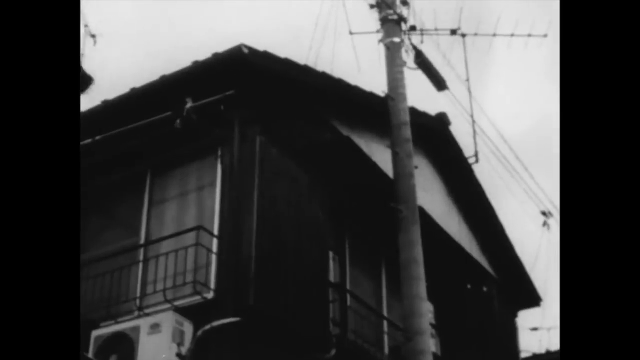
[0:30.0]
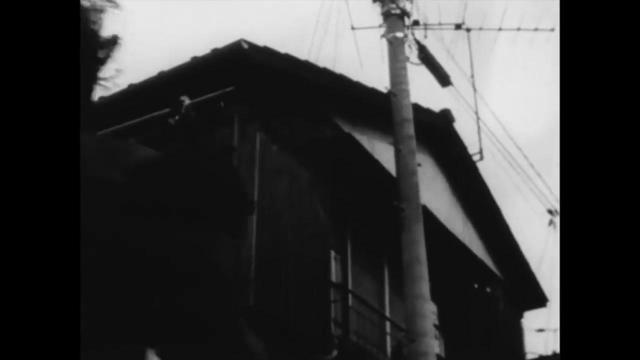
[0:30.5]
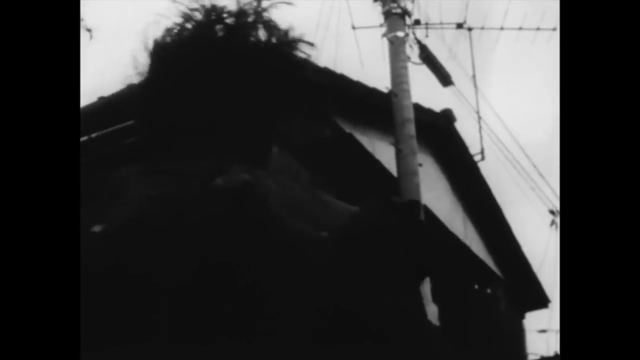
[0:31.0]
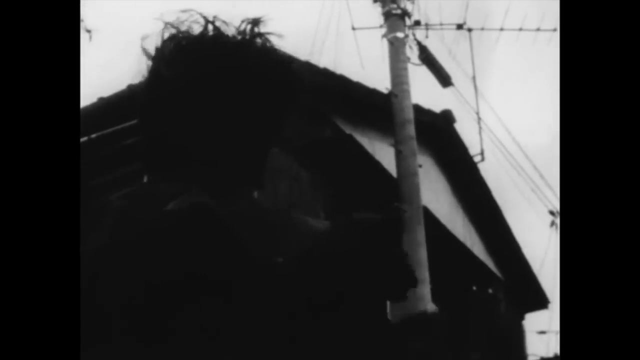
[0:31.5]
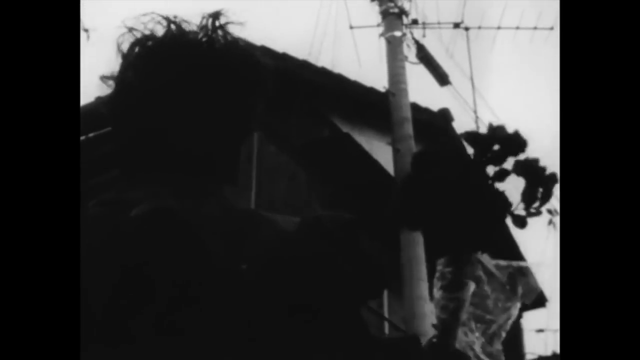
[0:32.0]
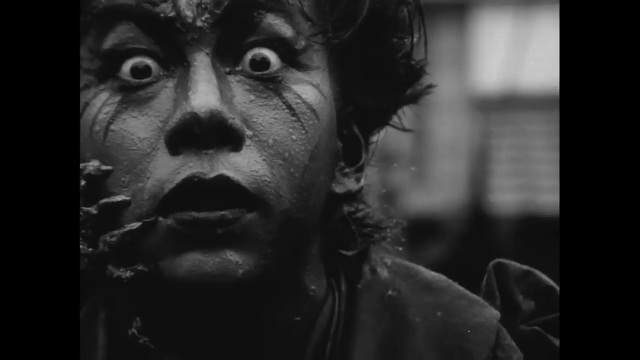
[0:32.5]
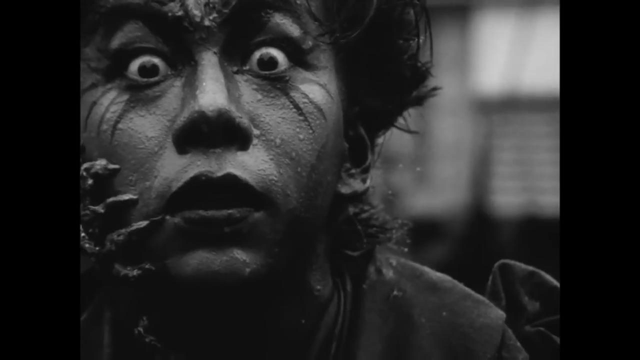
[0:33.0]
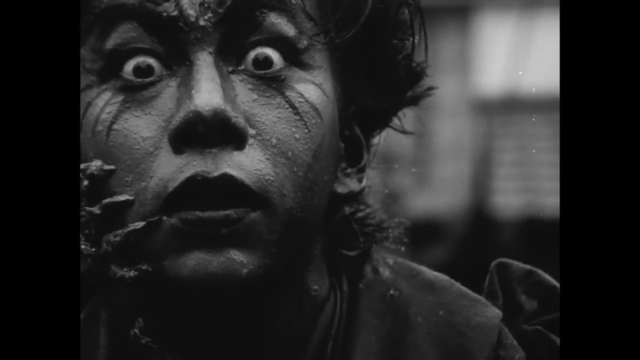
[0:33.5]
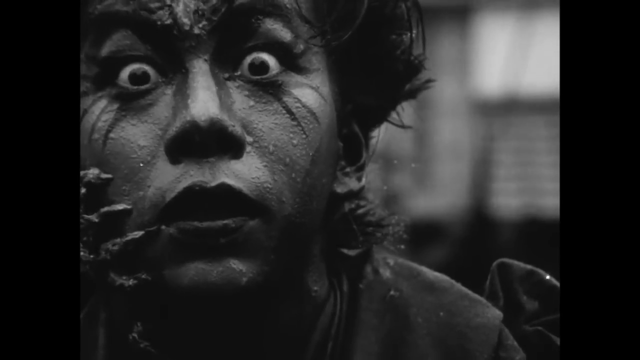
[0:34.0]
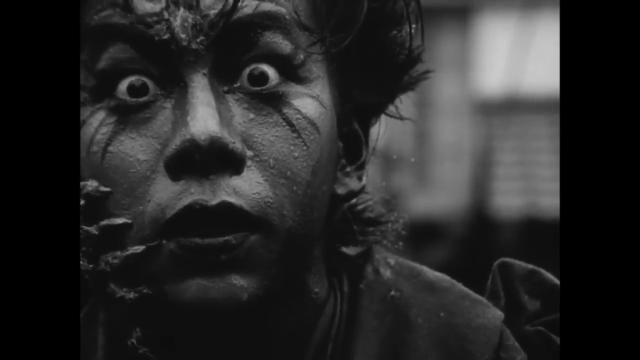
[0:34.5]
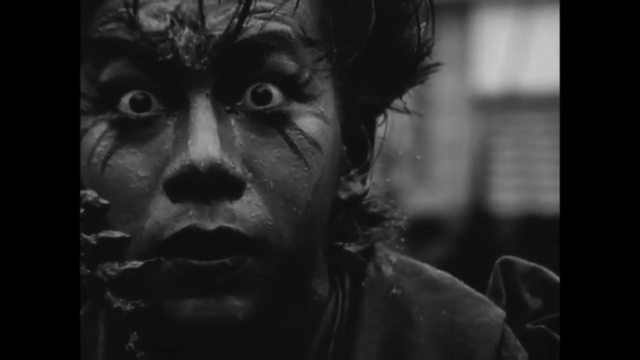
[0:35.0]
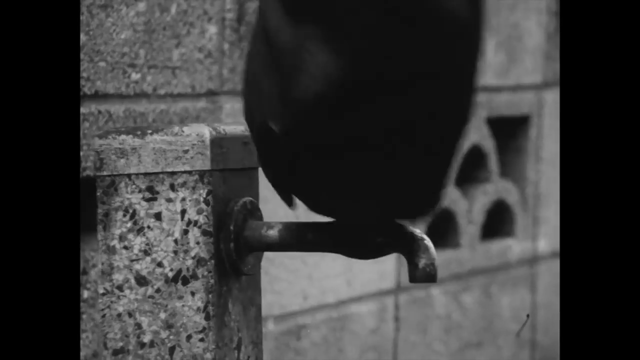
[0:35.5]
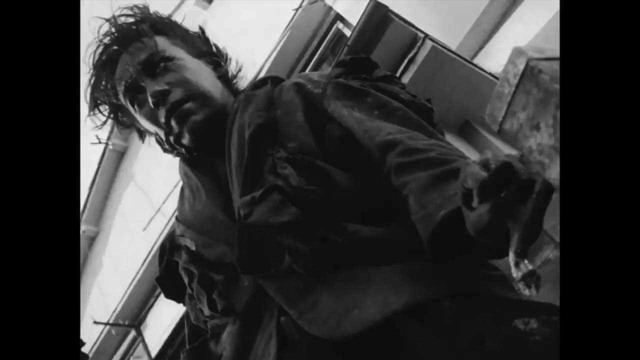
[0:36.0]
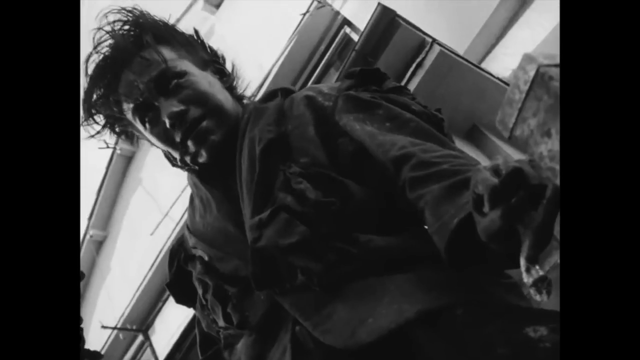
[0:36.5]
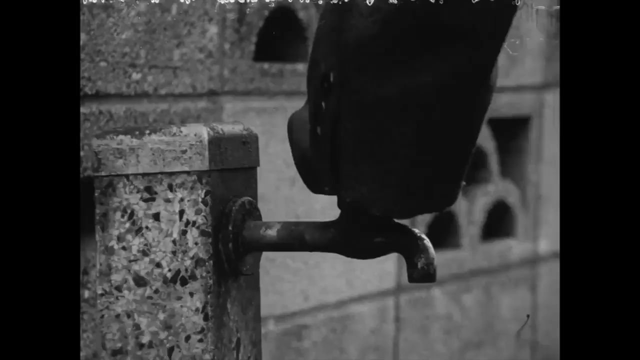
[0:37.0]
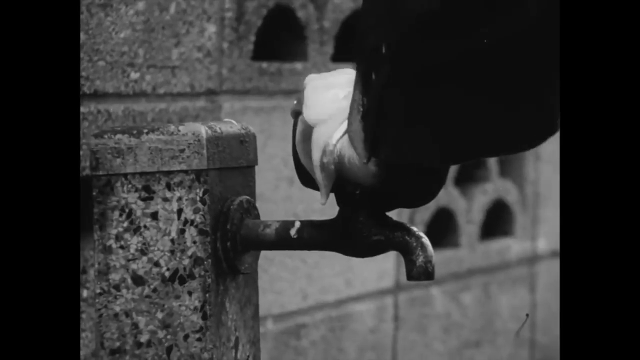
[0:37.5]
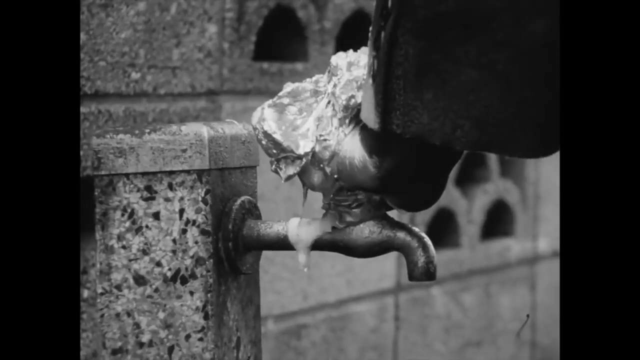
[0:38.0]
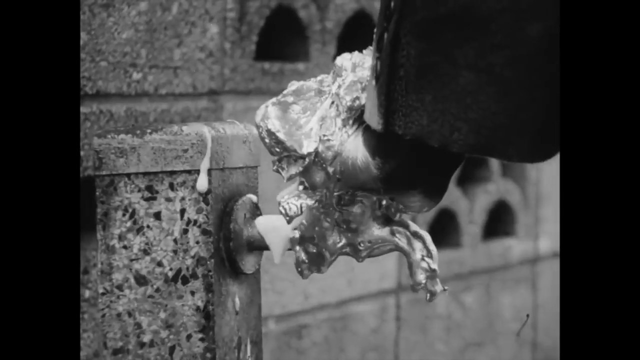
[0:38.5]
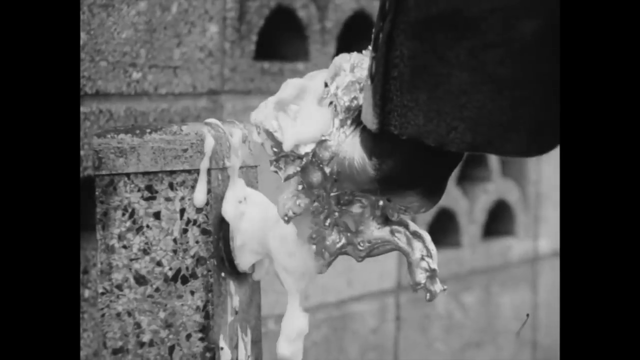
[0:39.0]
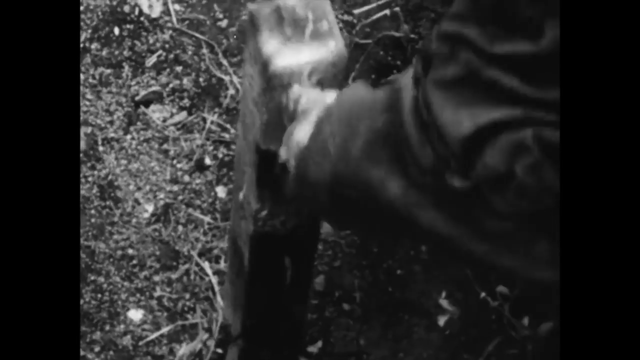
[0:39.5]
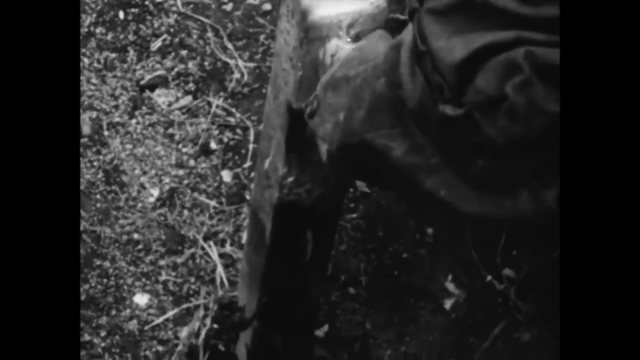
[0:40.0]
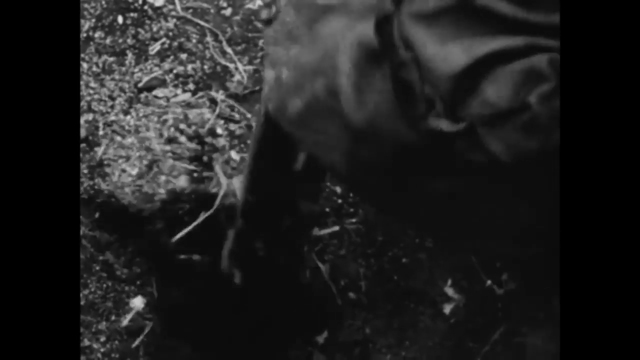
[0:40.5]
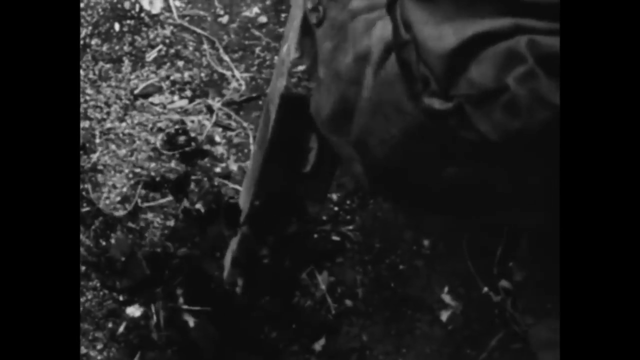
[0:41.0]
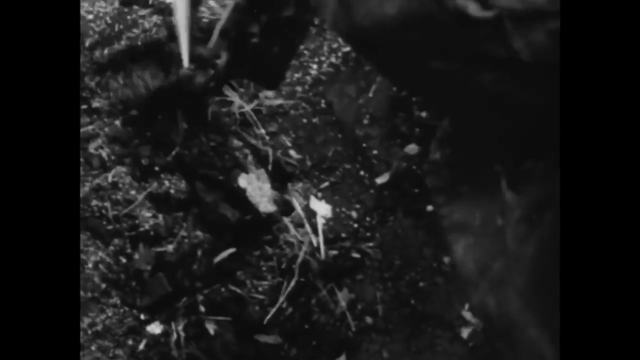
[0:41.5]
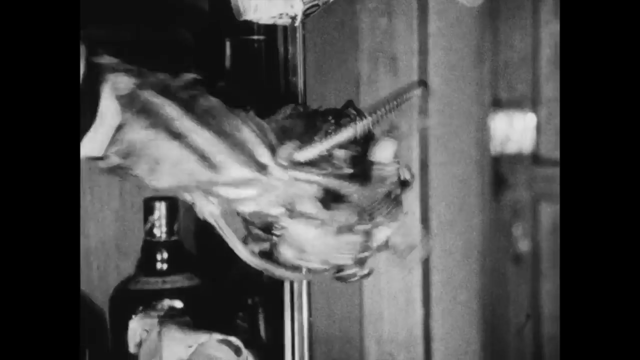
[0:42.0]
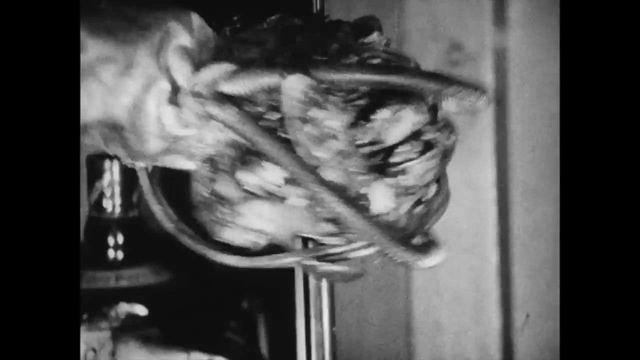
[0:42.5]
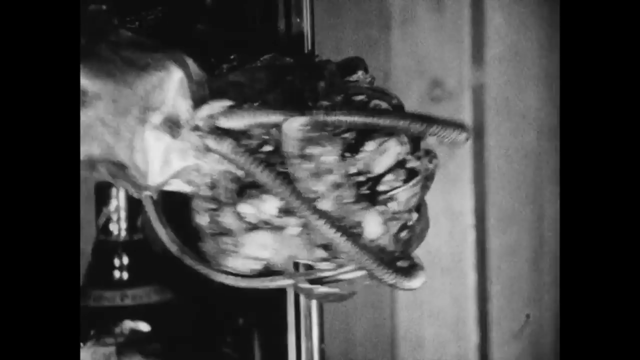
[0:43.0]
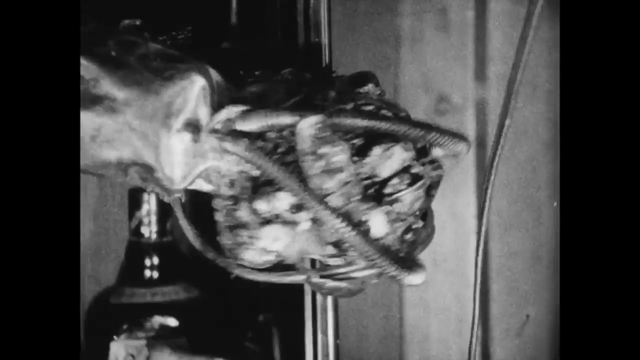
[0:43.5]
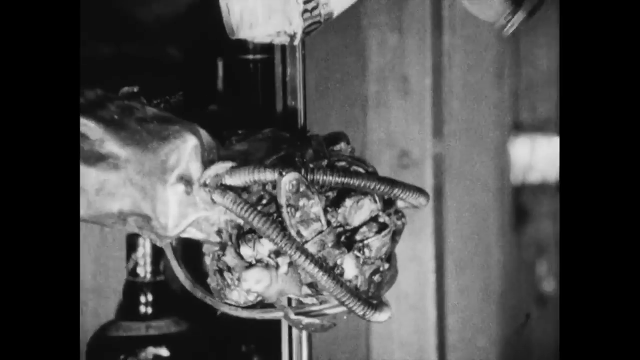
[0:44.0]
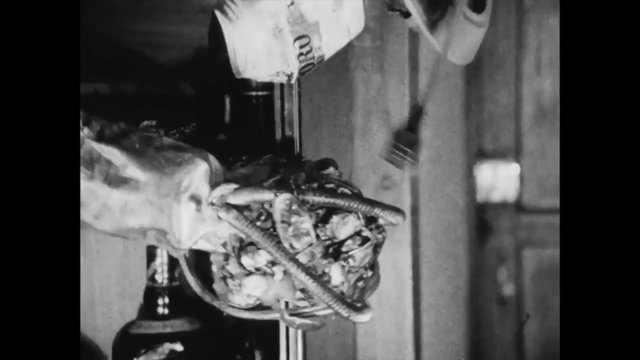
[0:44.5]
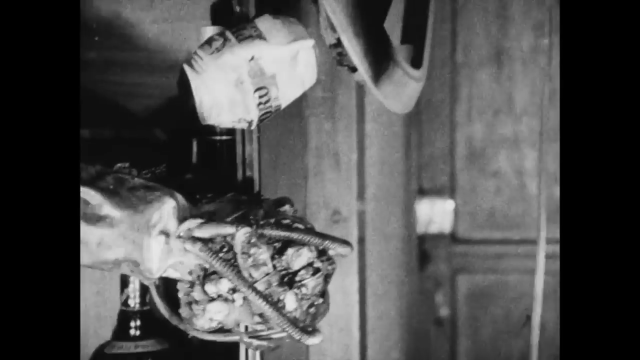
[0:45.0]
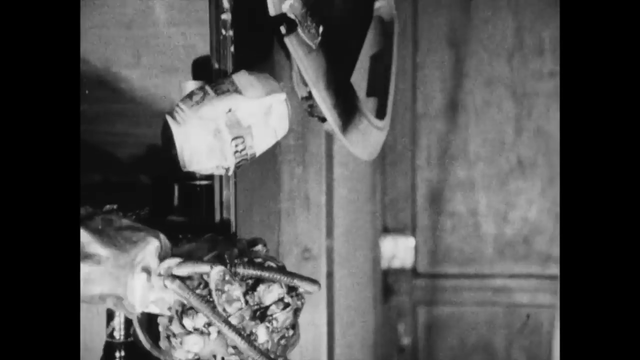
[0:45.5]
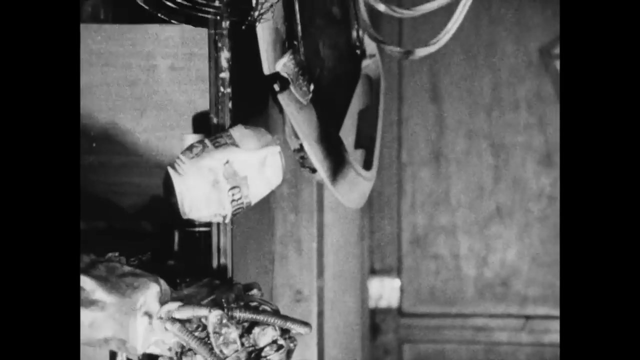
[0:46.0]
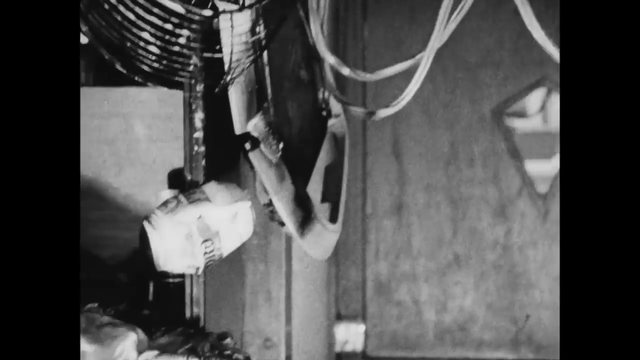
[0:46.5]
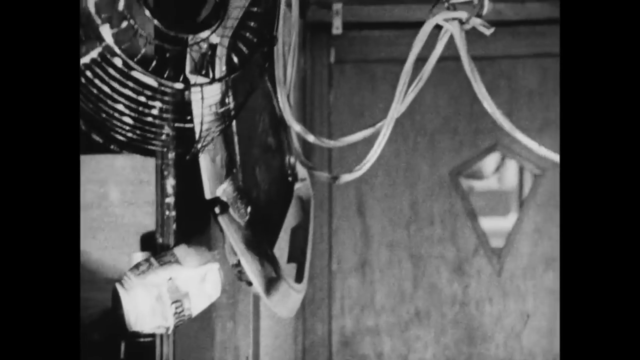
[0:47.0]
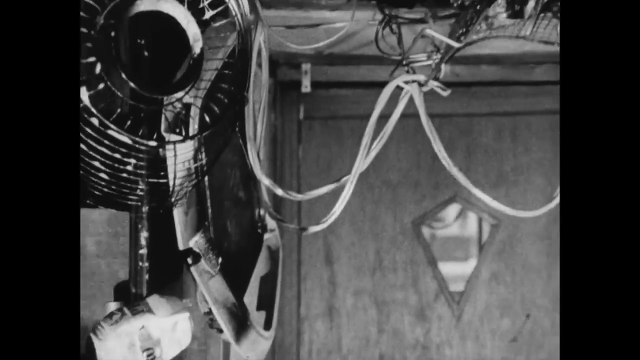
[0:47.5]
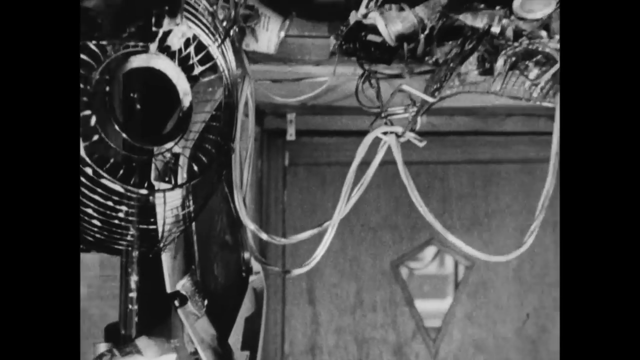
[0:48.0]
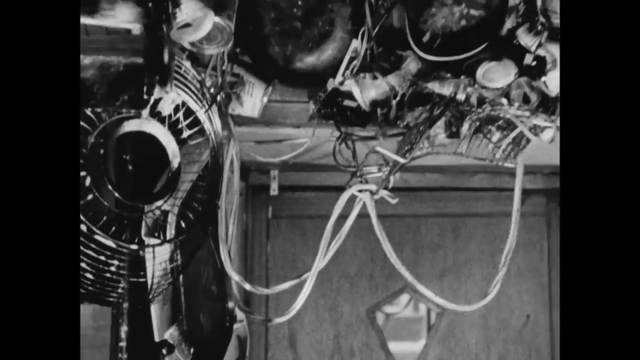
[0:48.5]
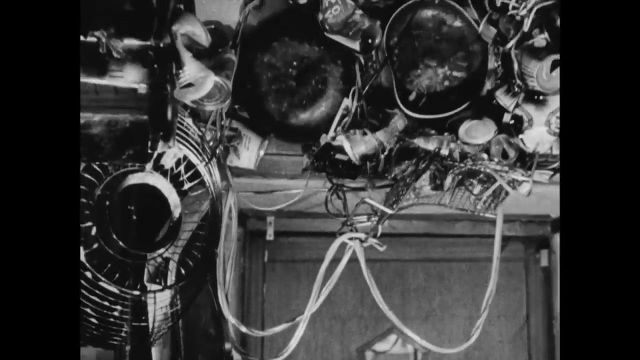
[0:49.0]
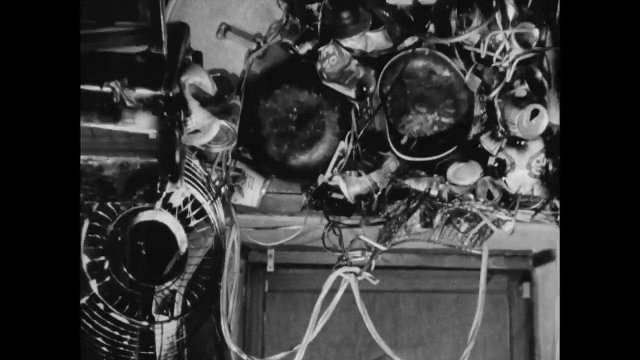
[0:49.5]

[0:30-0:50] The outside of a building is seen from below, with a telephone pole in front of it and radio antennas on top. In the lower left foreground is the silhouette of a man. The man's face appears, his eyes wide open in surprise. He appears to have some kind of claw on the right side of his jaw, and eyeliner extends from his eyes like spikes of color. His left hand turns a water spigot, and his hand looks like it is turning to metal. The spigot turns to metal as well, and his hand is stuck to the spigot, which is stuck to the post. He tries to pull his hand away, but ends up pulling up the whole pipe.